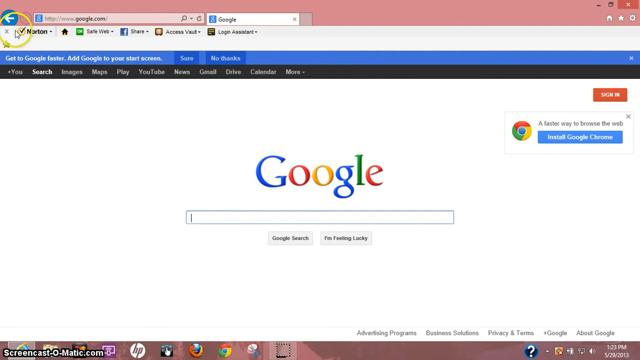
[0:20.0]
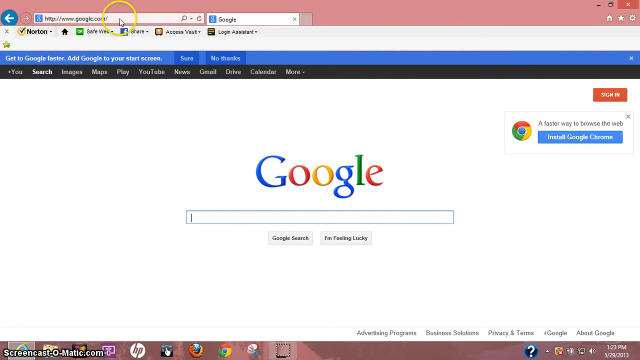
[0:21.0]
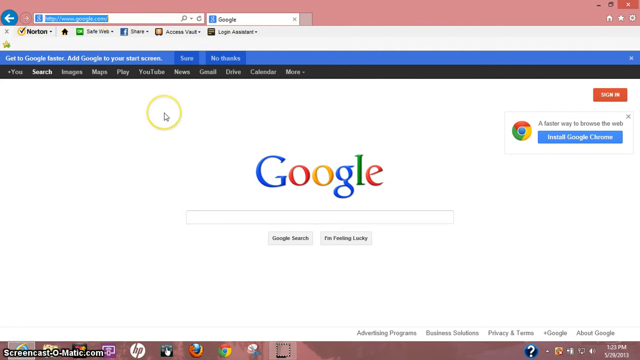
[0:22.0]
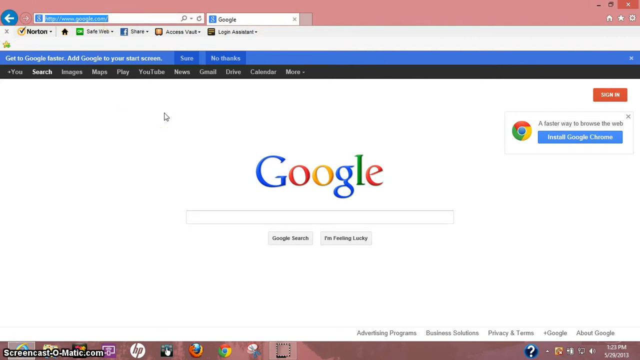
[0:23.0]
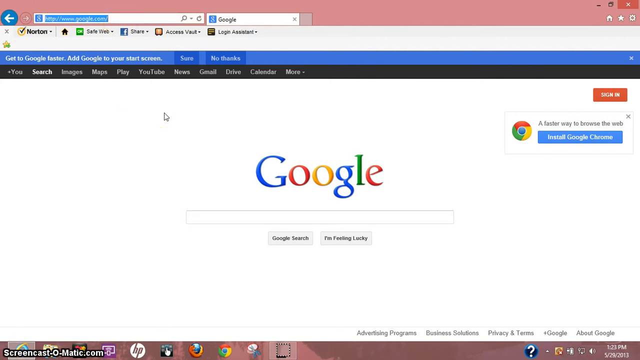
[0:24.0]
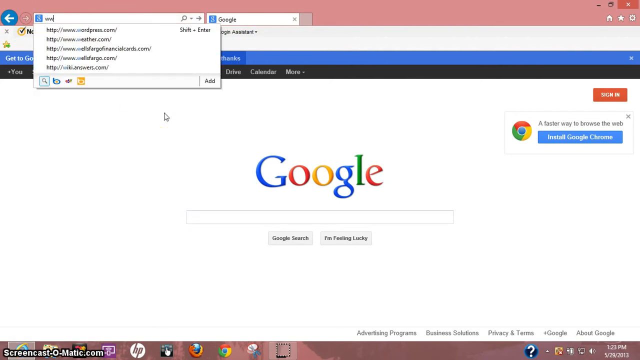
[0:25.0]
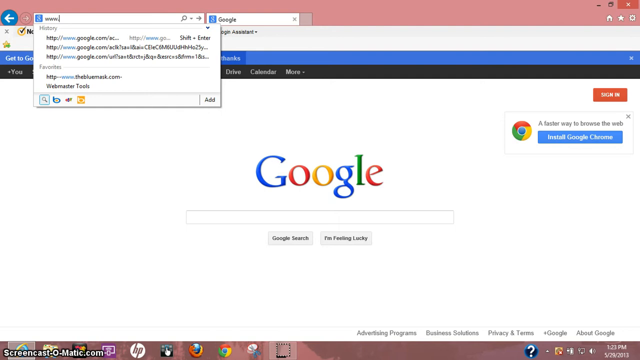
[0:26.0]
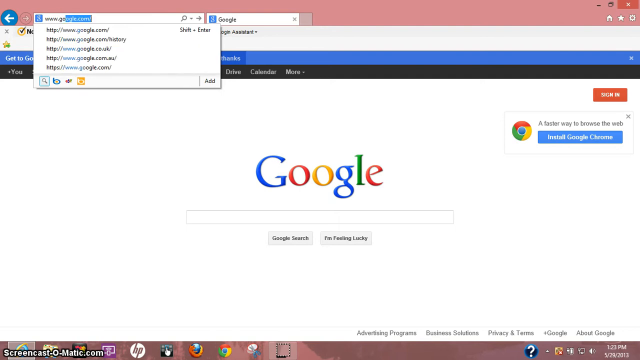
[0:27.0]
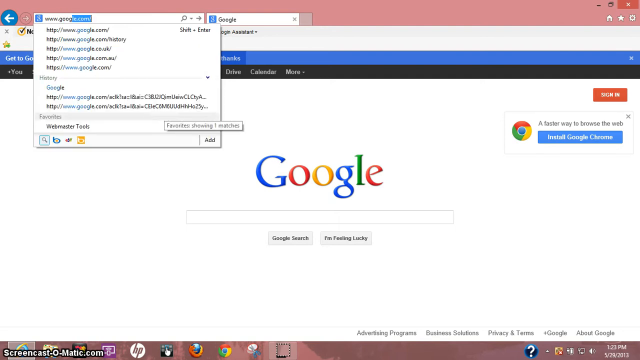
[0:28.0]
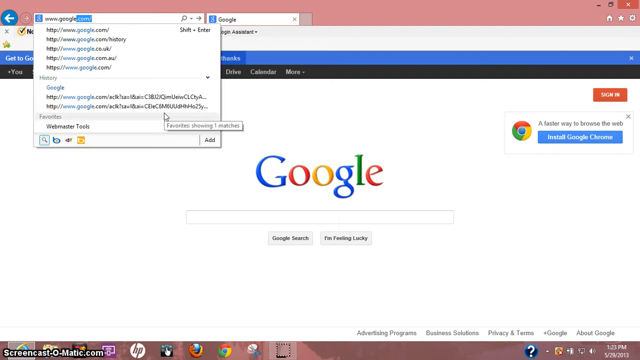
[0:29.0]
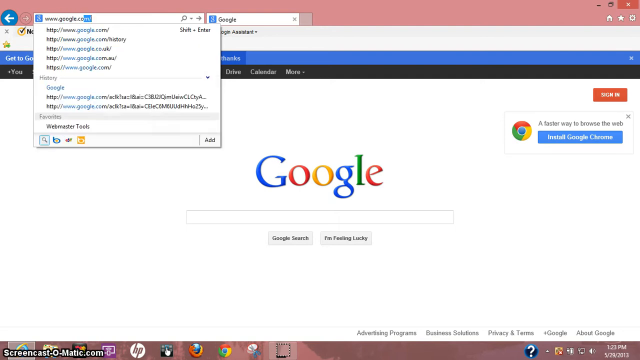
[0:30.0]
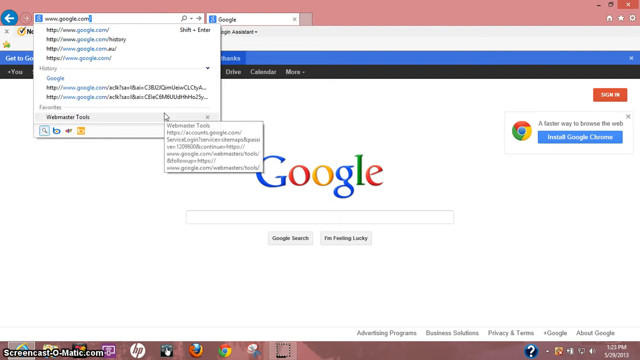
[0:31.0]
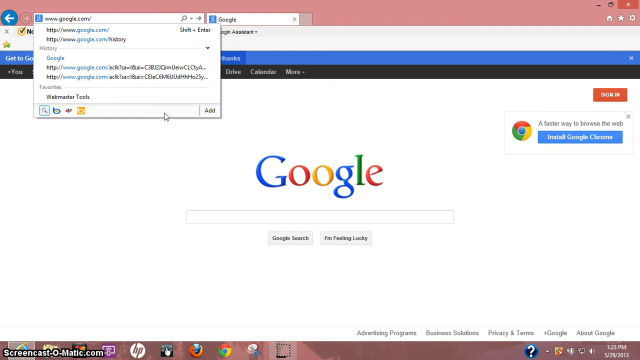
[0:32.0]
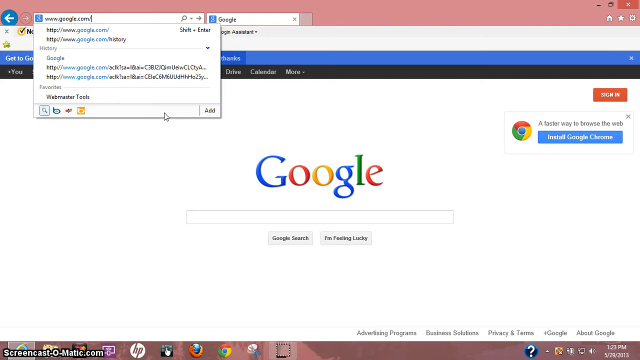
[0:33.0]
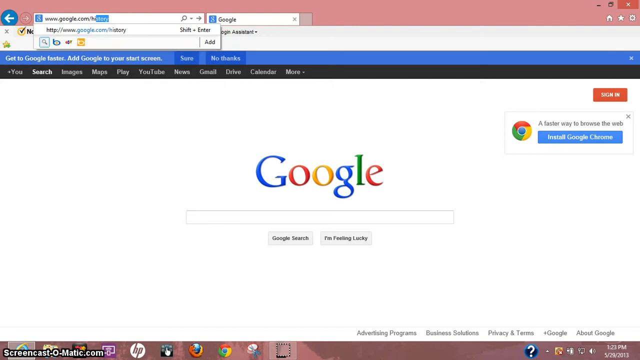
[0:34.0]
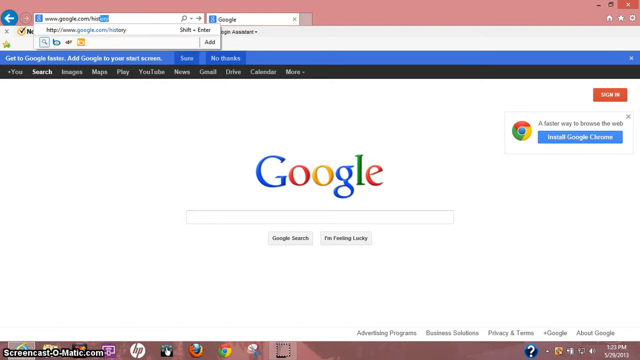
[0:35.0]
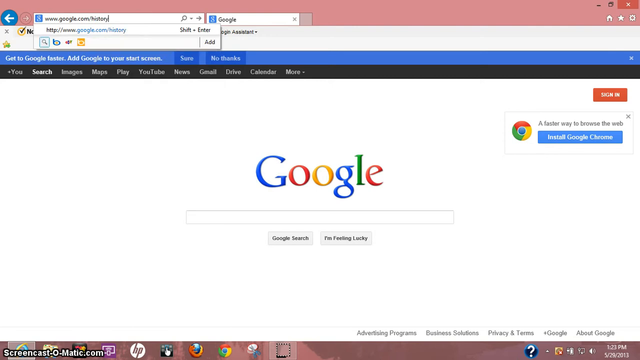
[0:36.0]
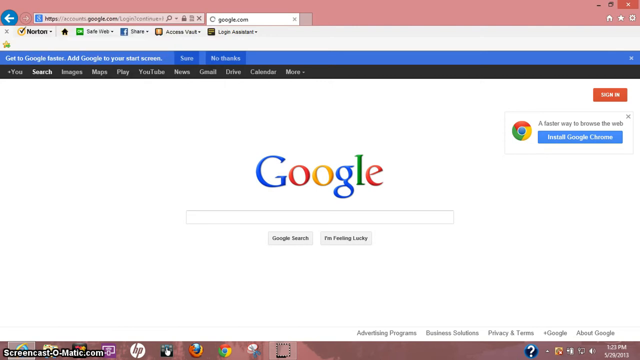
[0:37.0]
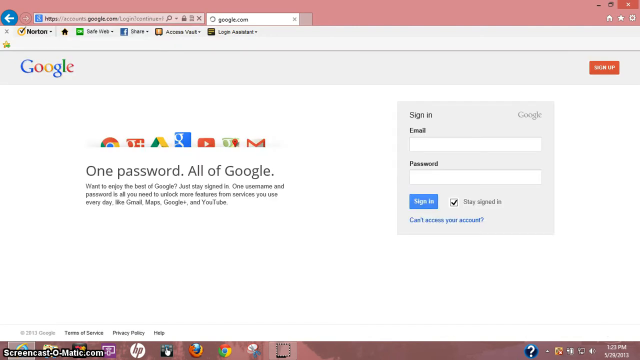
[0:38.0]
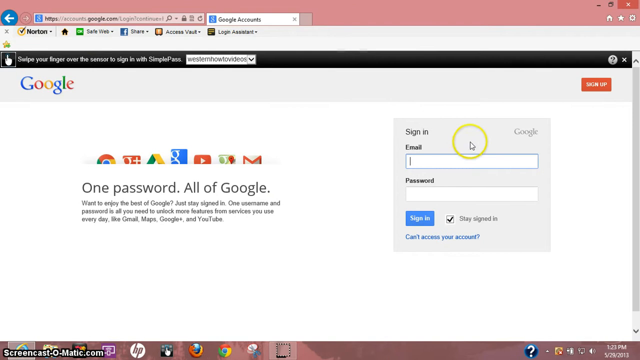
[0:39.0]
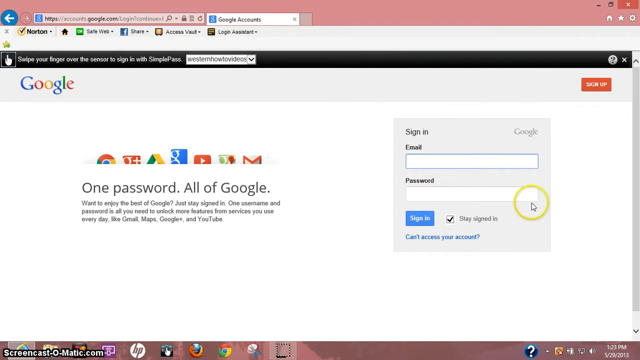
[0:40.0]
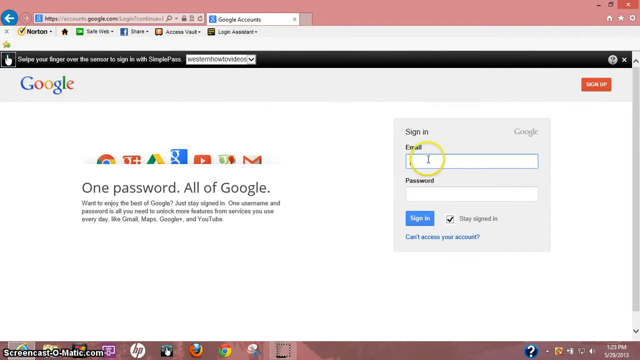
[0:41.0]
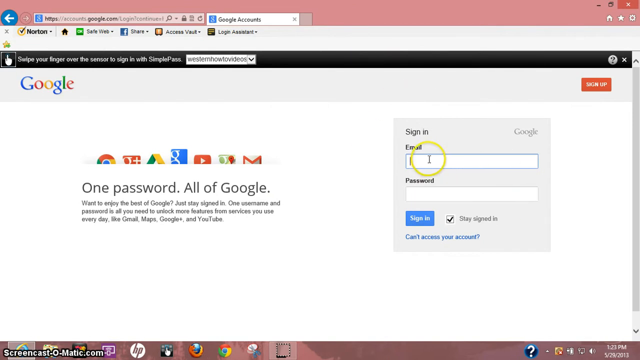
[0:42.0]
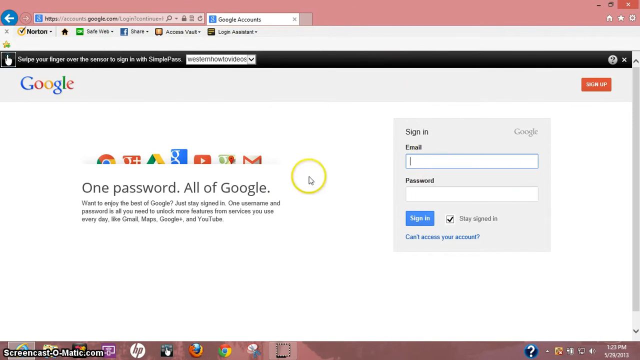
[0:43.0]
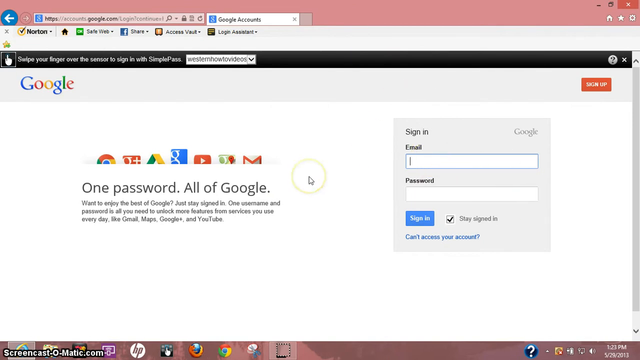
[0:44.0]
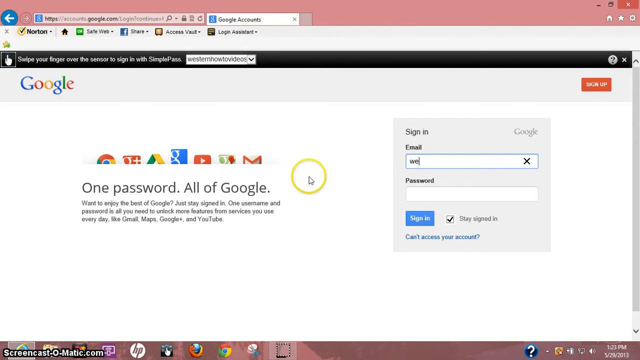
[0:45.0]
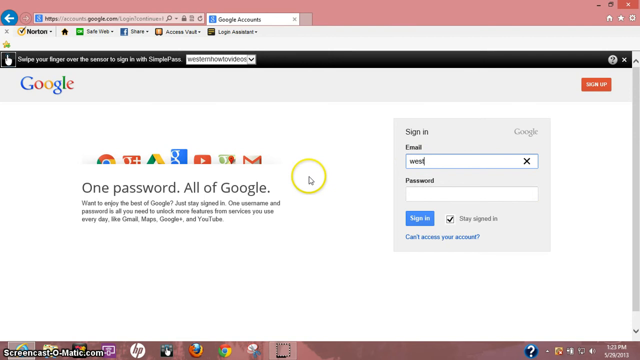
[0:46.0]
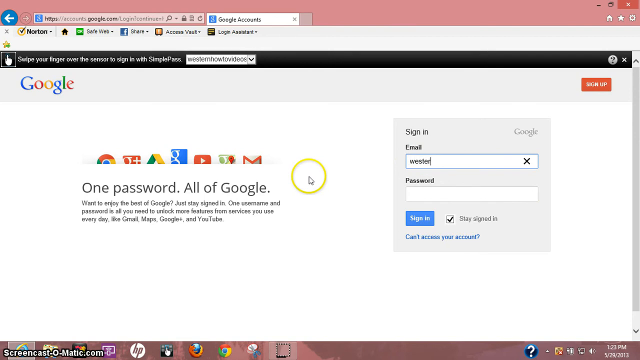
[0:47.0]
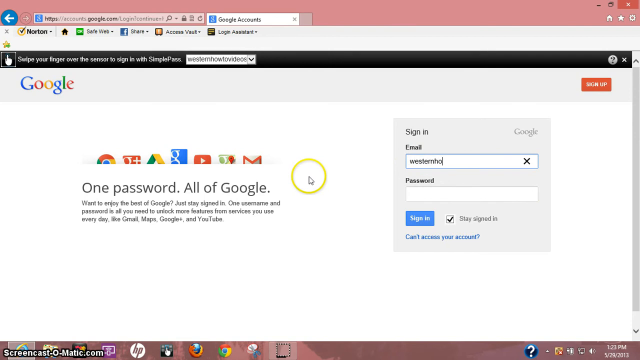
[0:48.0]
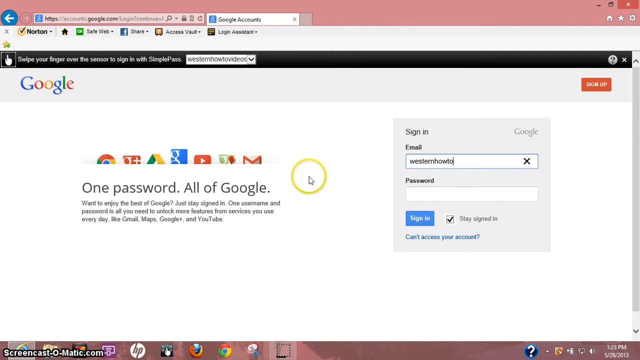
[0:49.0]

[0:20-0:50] The Google search page is shown with a mouse cursor inside the search bar and the "Google search" and "I'm feeling lucky" rectangular buttons at the very bottom. A mouse pointer is in the upper left corner near the top of the browser and the back button, kind of hovering where a Norton application logo is, with a little X button there. The pointer moves to the right and clicks on the browser's address bar at the top, and the current text there, "www.google.com", becomes selected, turning blue with a blue rectangle around it. The cursor moves down, and someone types "www.google.com" followed by a backslash and then "history" into the address bar. A different page opens that says "one password, all of Google", with a sign-in box to the right. The mouse pointer moves in circles, then clicks into the email box in the sign-in box, and the person appears to type "western how-to videos".